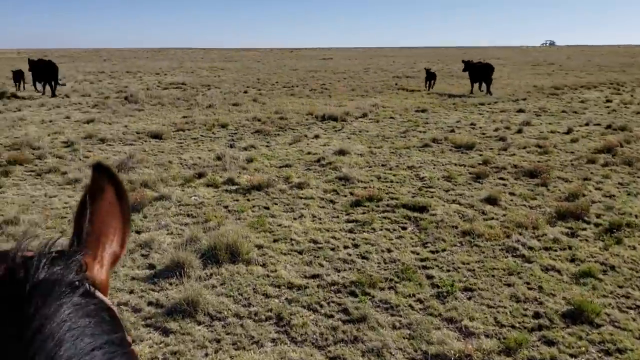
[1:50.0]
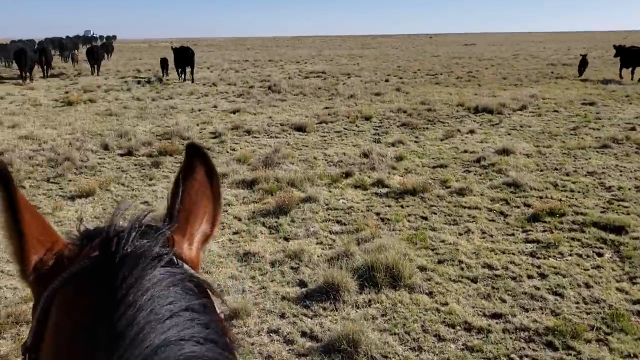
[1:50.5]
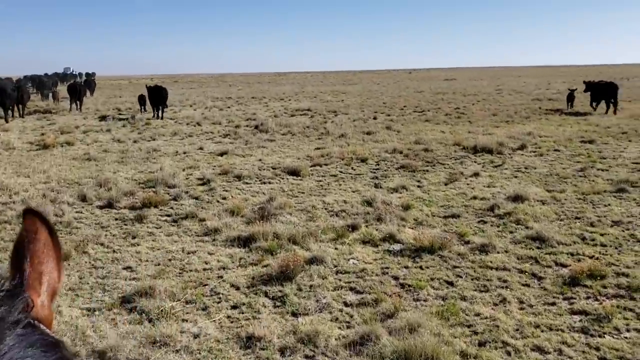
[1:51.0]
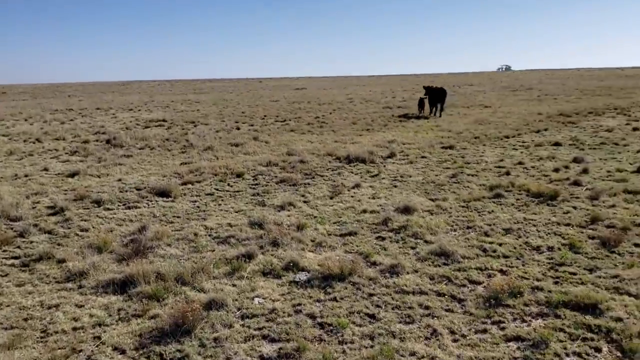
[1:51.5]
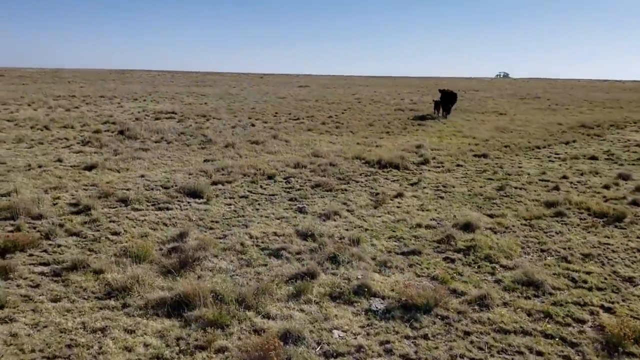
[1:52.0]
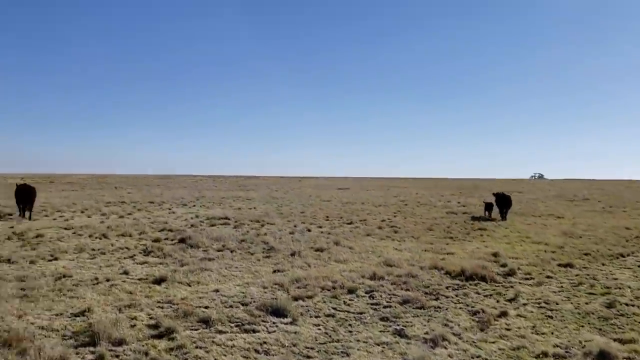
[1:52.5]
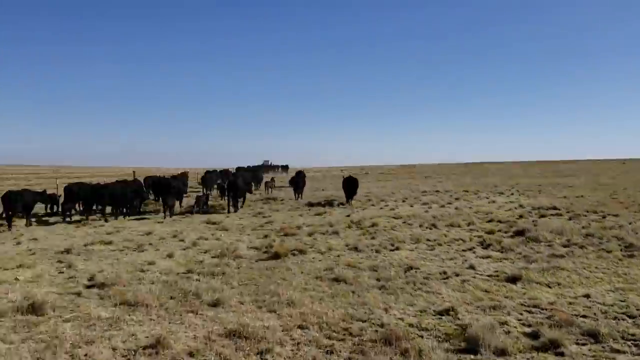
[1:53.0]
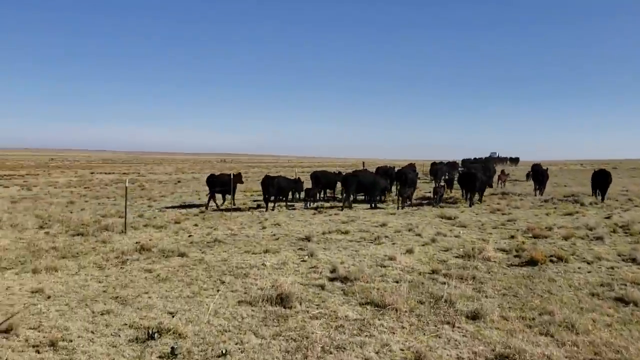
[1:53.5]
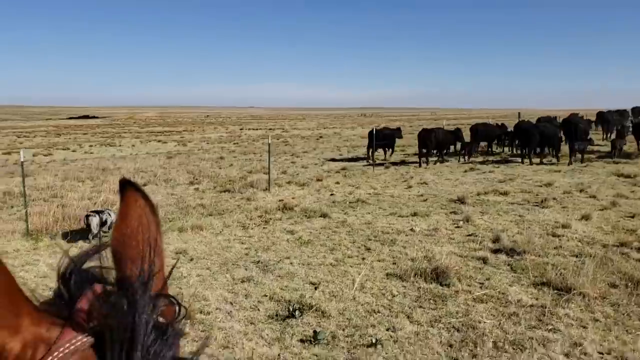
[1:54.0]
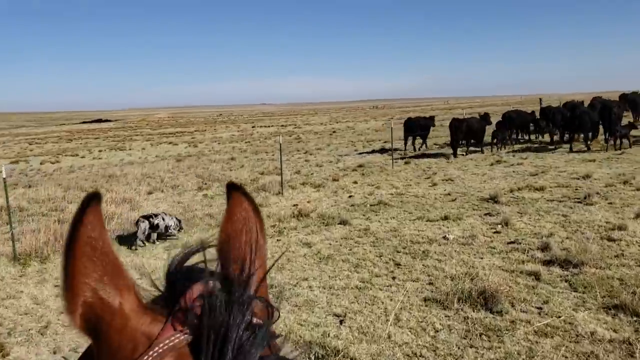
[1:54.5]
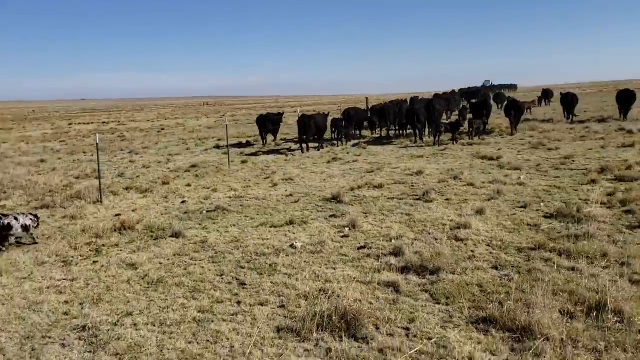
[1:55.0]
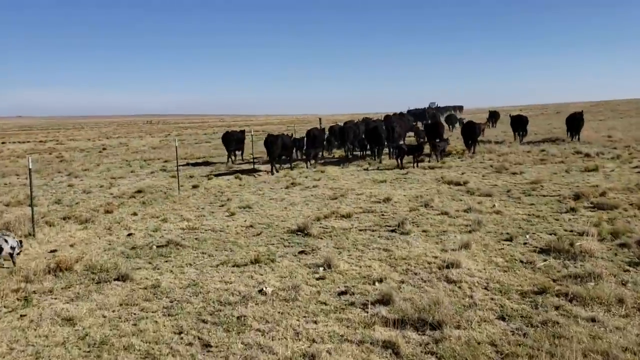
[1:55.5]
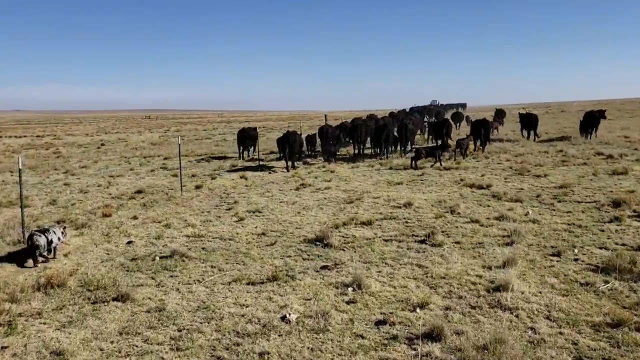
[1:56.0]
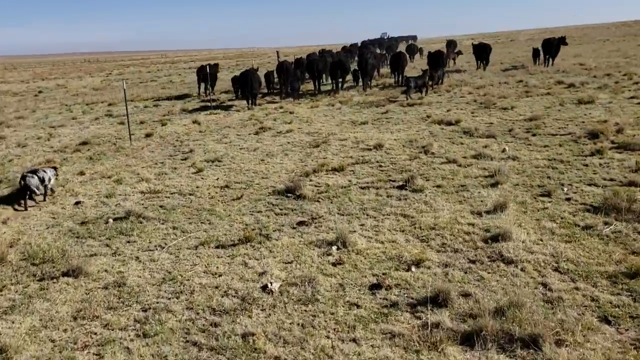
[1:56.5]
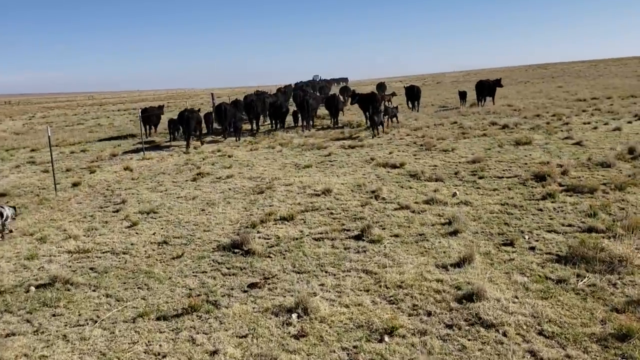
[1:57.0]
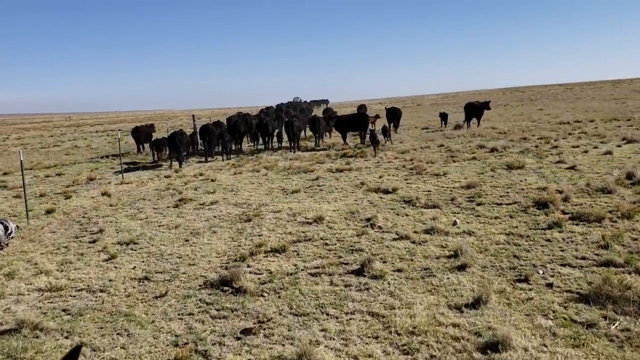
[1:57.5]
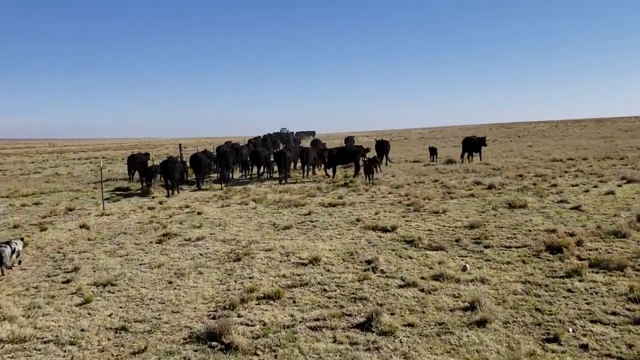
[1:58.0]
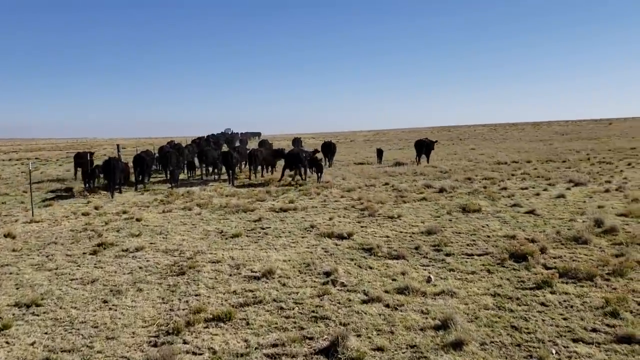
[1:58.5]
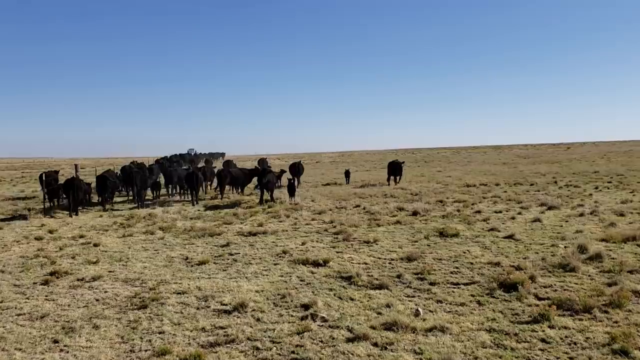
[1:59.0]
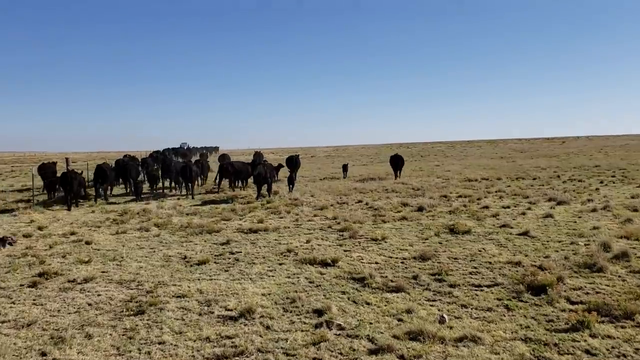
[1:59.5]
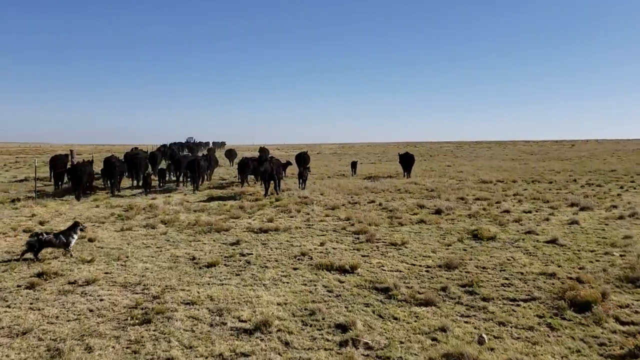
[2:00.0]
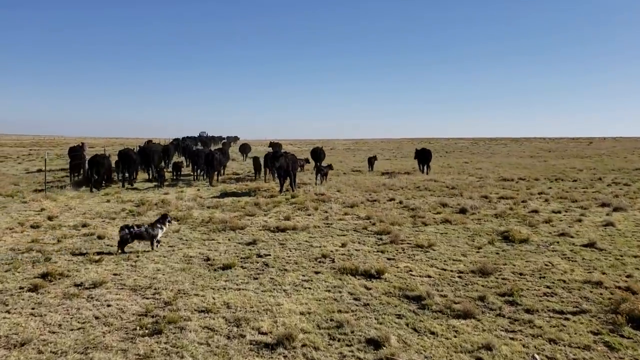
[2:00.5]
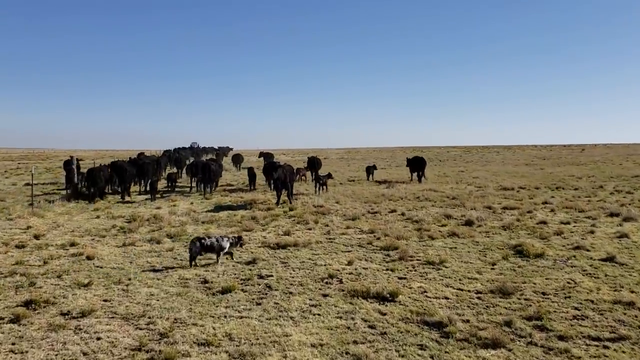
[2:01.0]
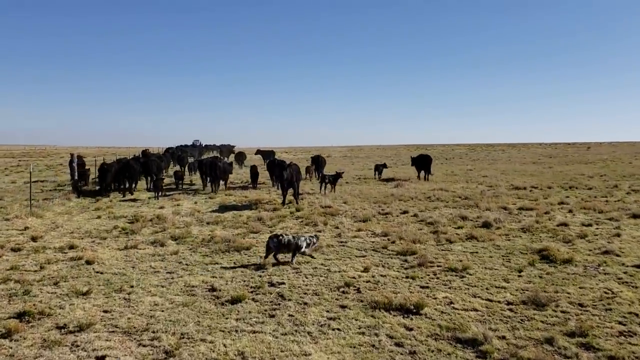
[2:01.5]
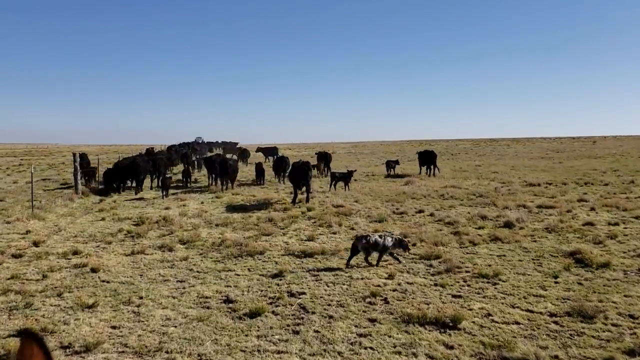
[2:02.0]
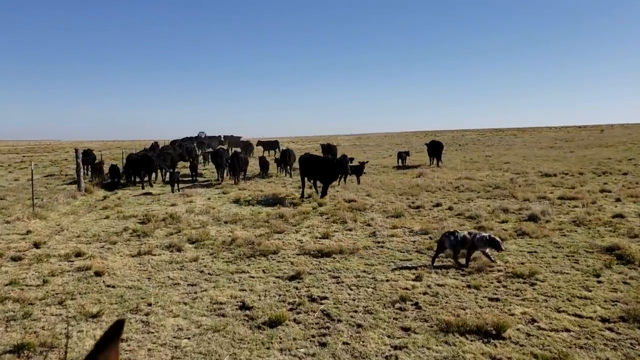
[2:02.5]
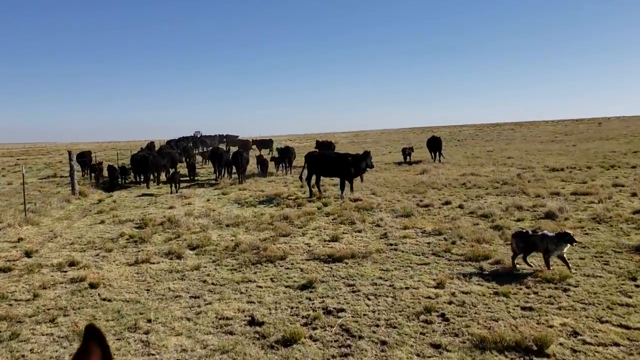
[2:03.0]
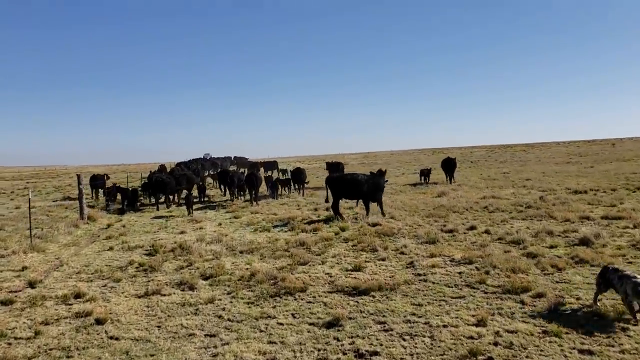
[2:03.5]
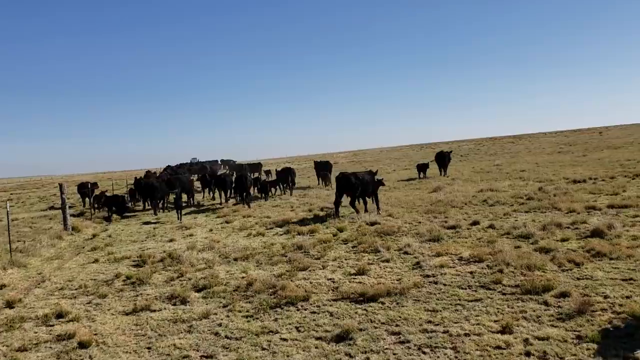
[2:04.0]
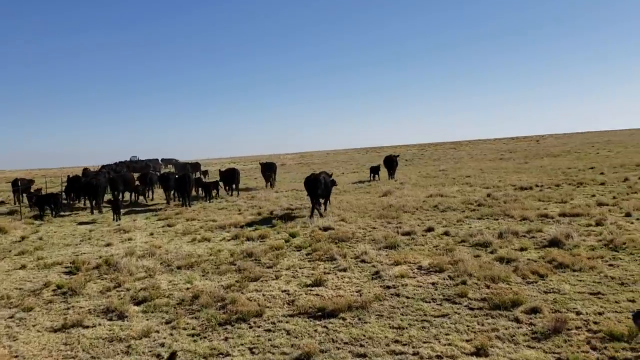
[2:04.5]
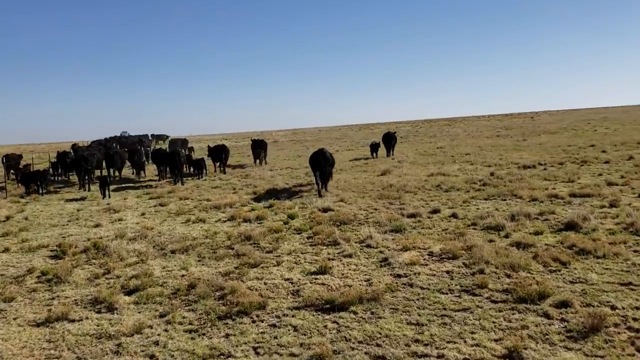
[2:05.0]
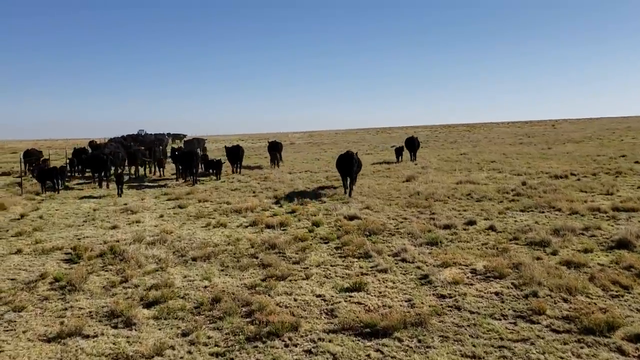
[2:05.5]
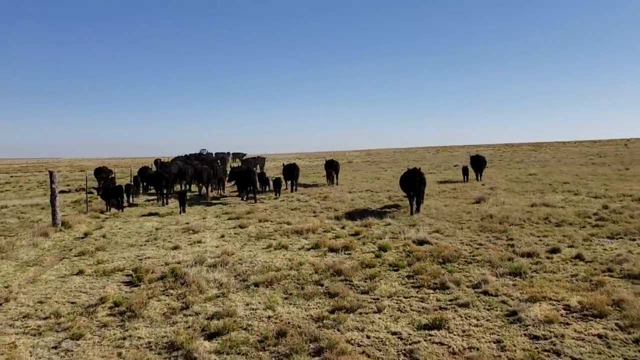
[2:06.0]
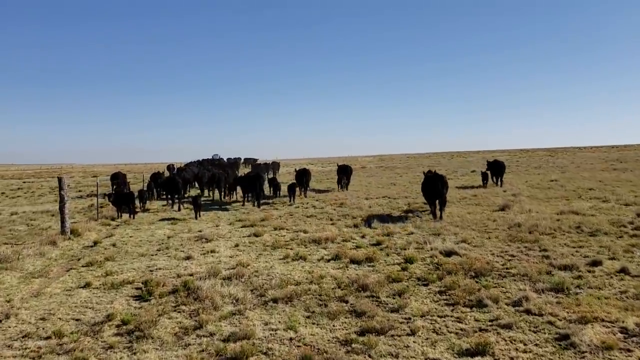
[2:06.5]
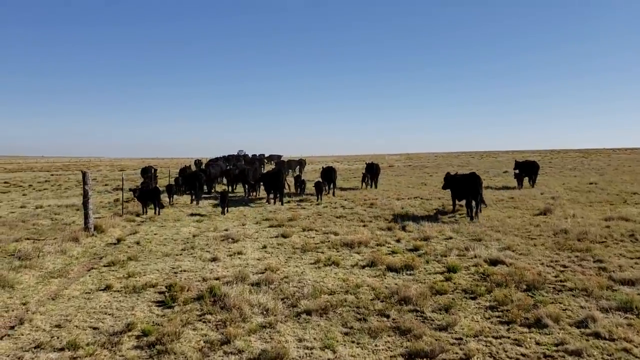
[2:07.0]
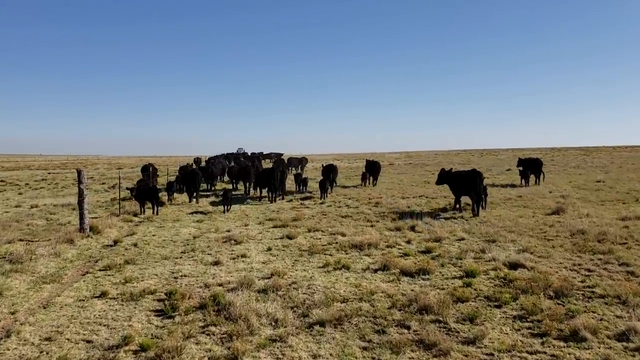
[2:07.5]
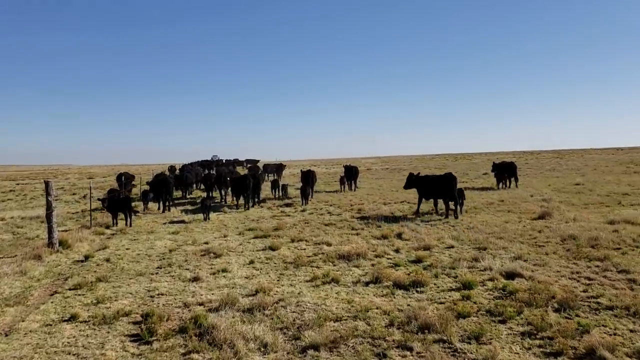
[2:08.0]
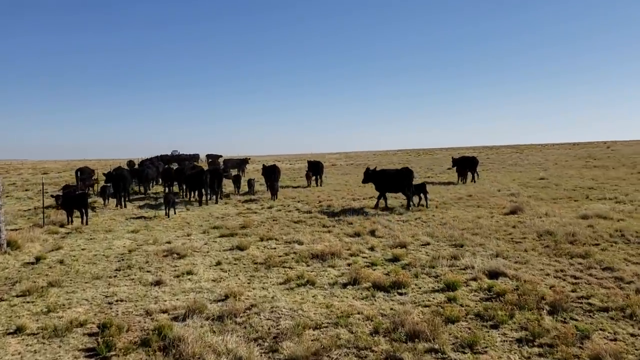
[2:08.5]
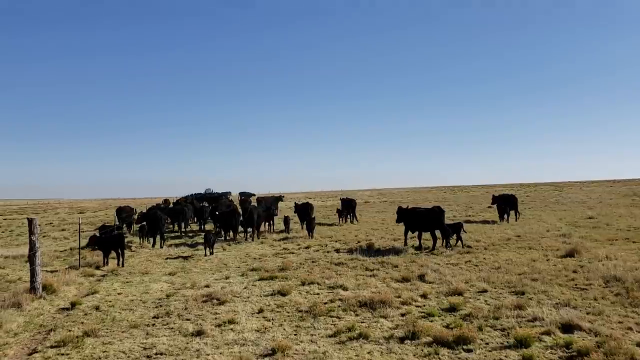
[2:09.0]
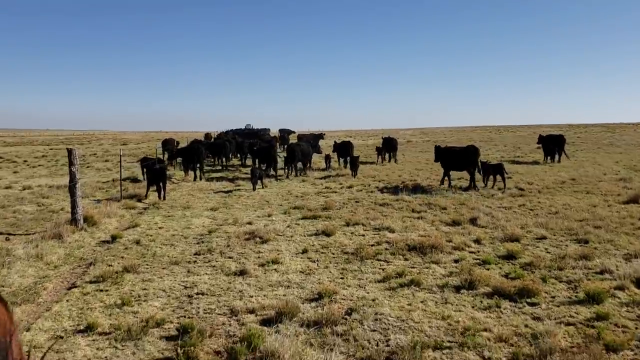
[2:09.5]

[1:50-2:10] Two cattle have separated from the group, and the rancher sort of leaves them to their own devices and focuses on the herd ahead. The dog is visible; it has now crossed the fence and is inside it. The dog moves right to retrieve other cattle. The formation appears to be breaking, with some stragglers turning back instead of moving forward, and the dog tries to corral them in one place. Toward the end, two or three individual cattle stray from the main group and stand about on the right side, and the dog looks about to push them back to the center.